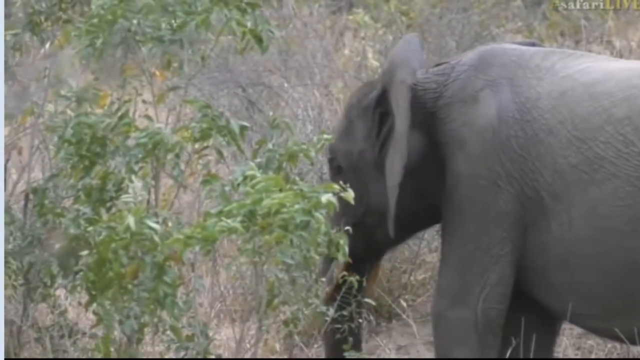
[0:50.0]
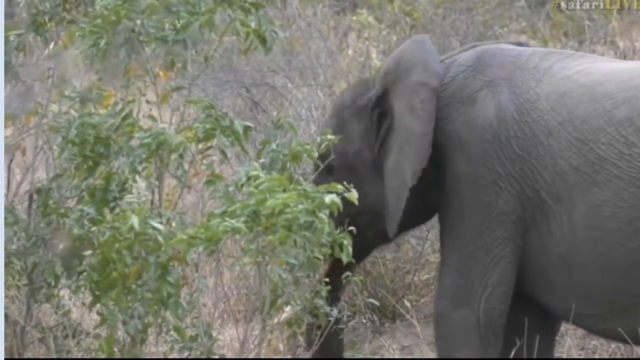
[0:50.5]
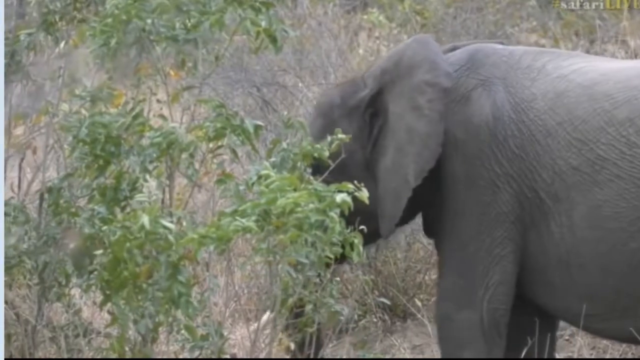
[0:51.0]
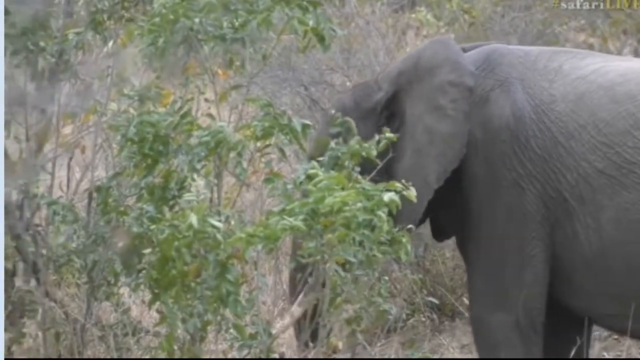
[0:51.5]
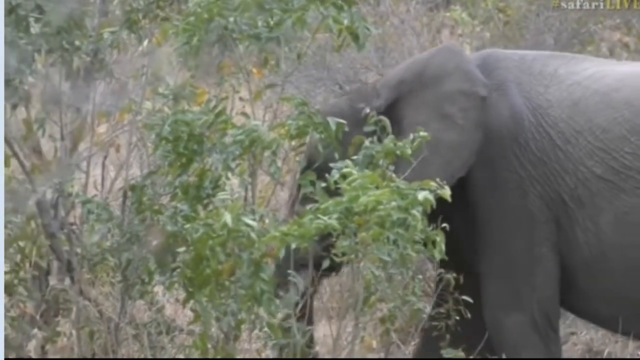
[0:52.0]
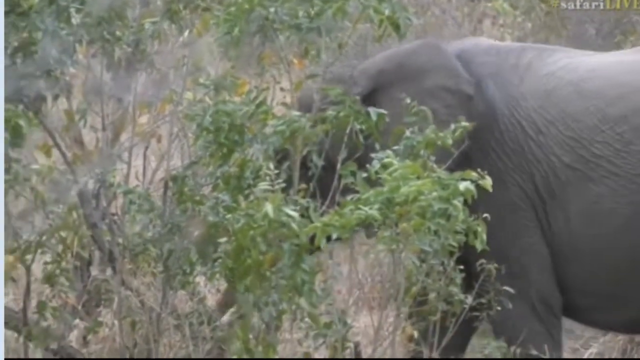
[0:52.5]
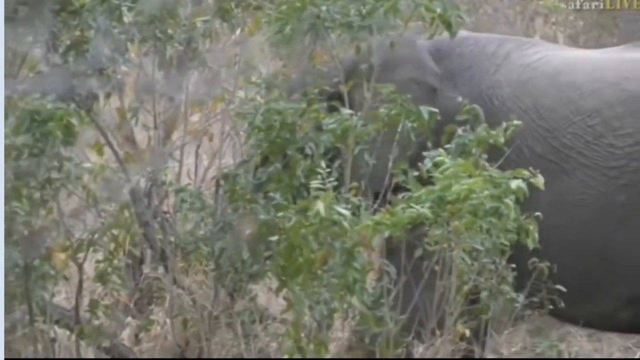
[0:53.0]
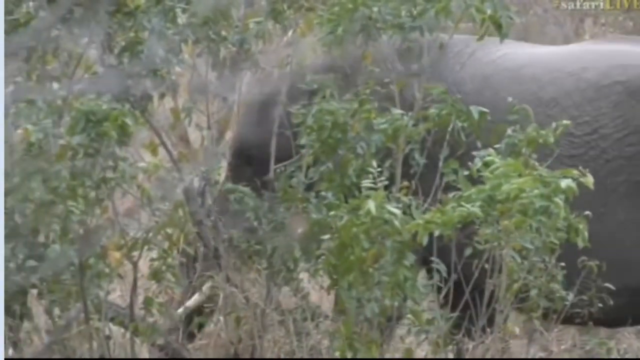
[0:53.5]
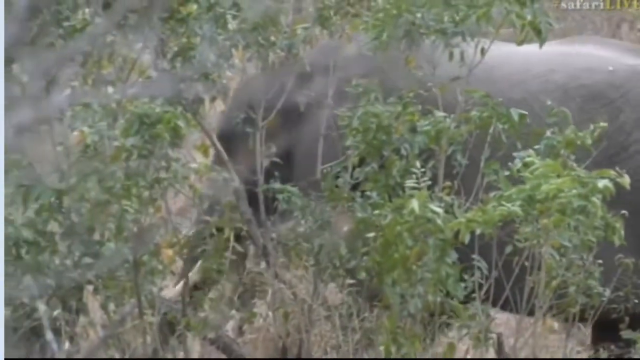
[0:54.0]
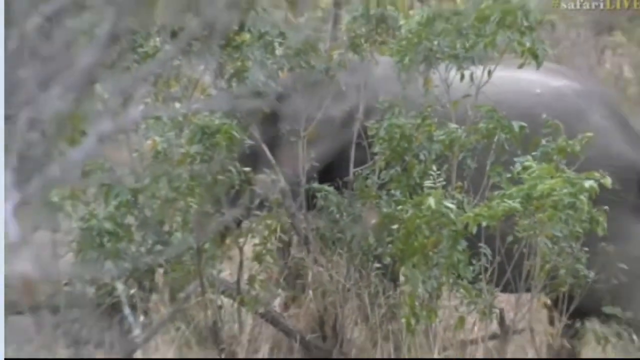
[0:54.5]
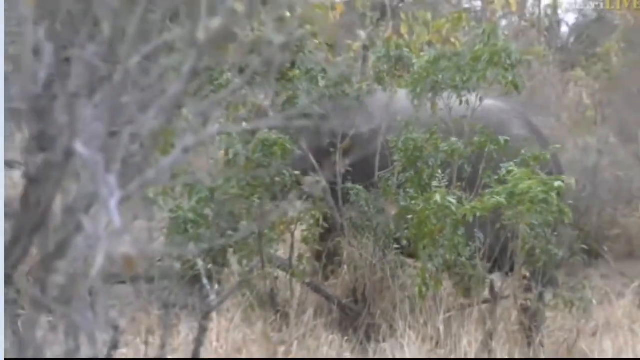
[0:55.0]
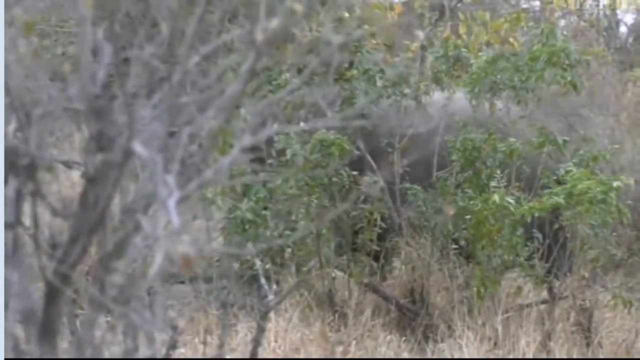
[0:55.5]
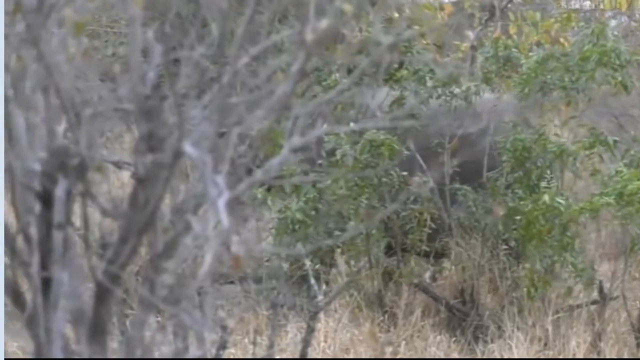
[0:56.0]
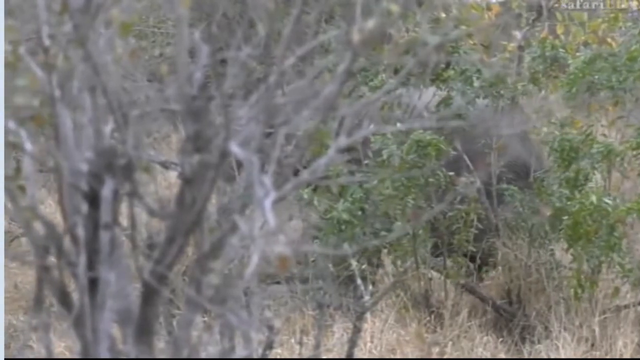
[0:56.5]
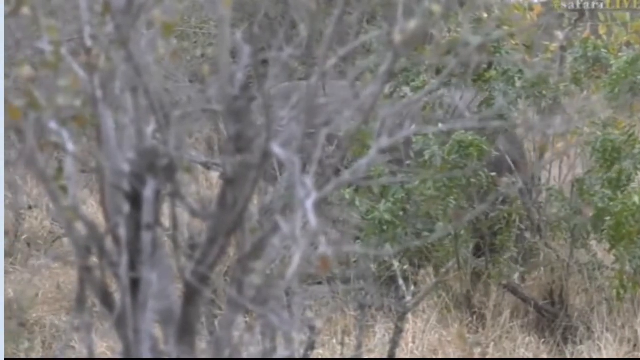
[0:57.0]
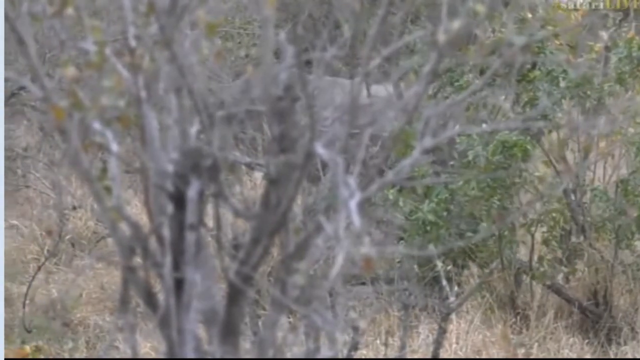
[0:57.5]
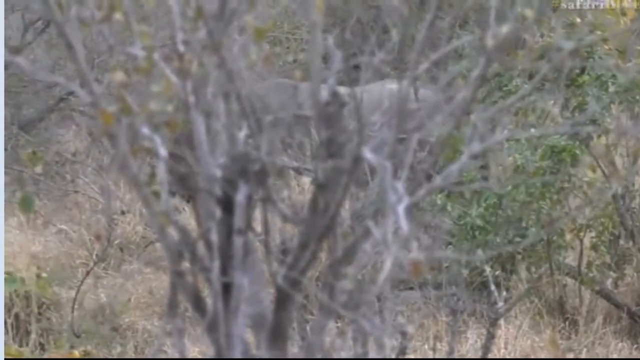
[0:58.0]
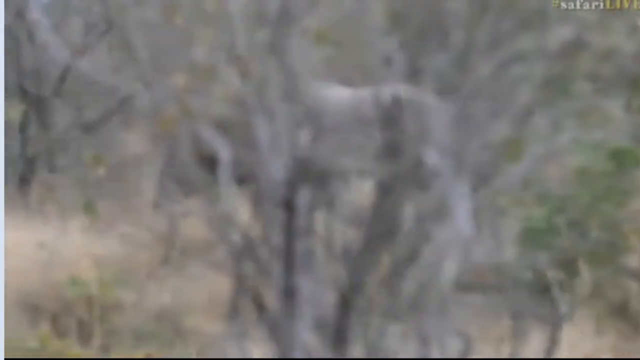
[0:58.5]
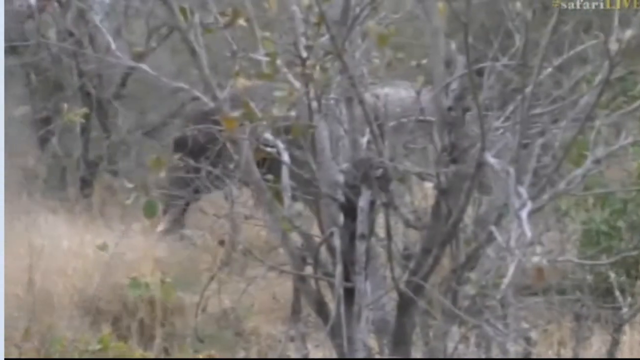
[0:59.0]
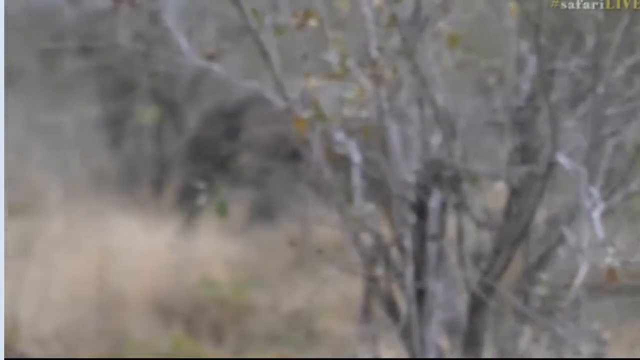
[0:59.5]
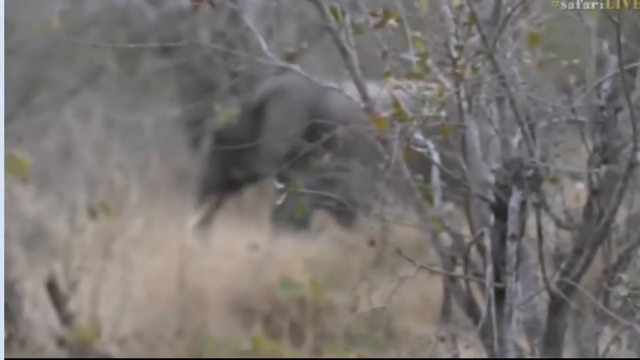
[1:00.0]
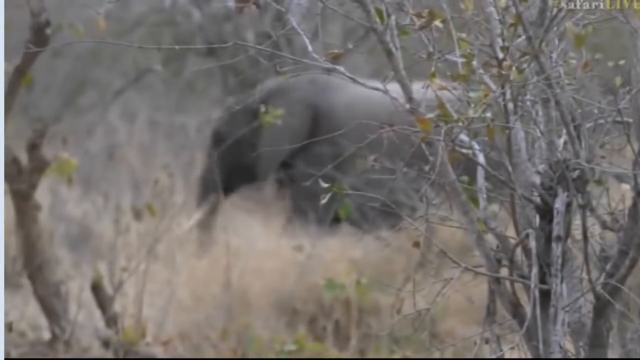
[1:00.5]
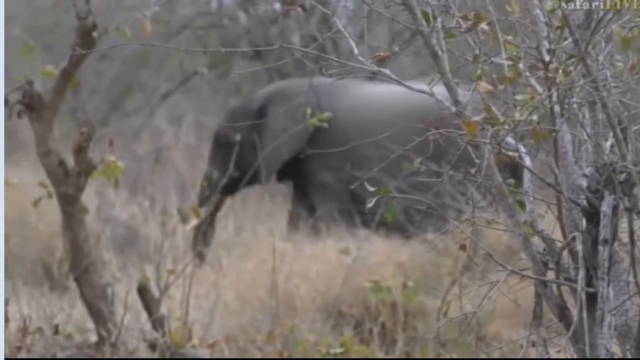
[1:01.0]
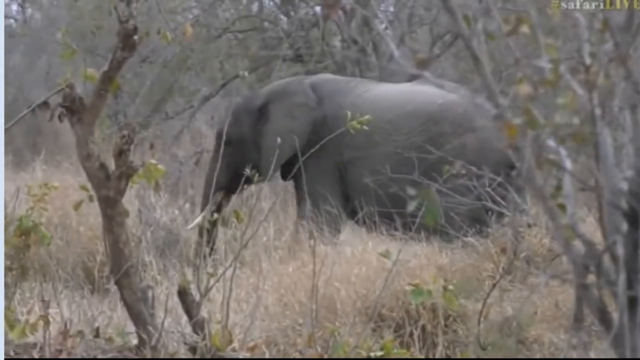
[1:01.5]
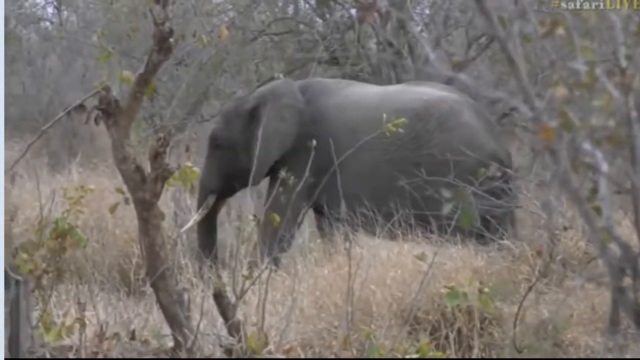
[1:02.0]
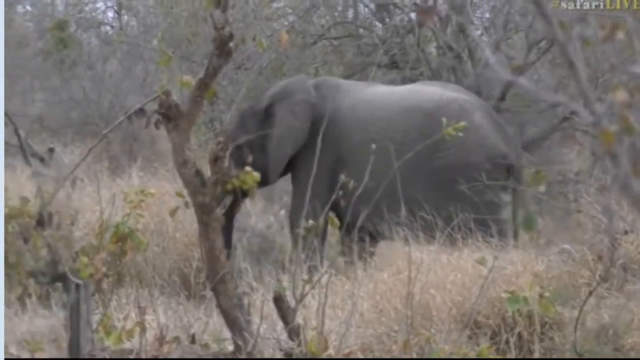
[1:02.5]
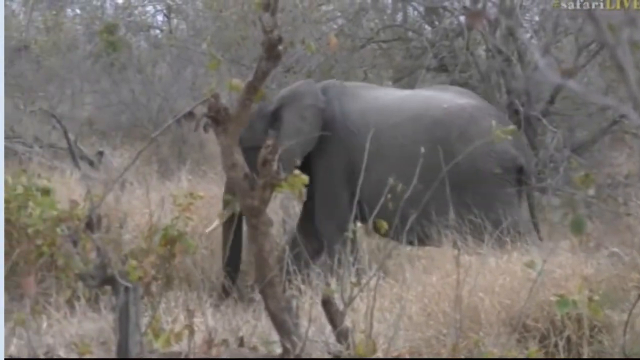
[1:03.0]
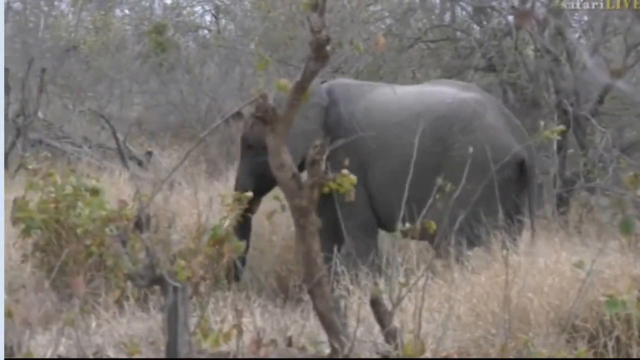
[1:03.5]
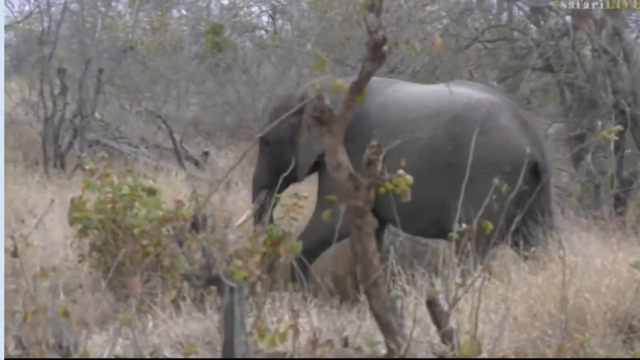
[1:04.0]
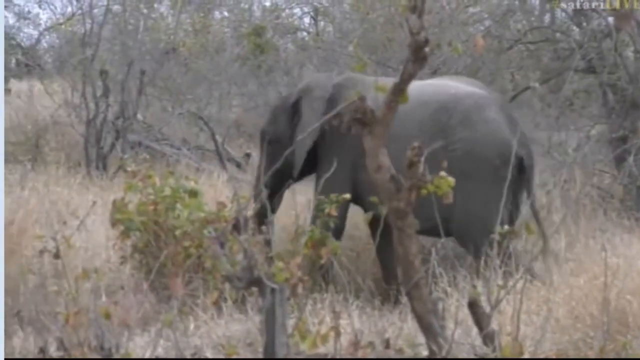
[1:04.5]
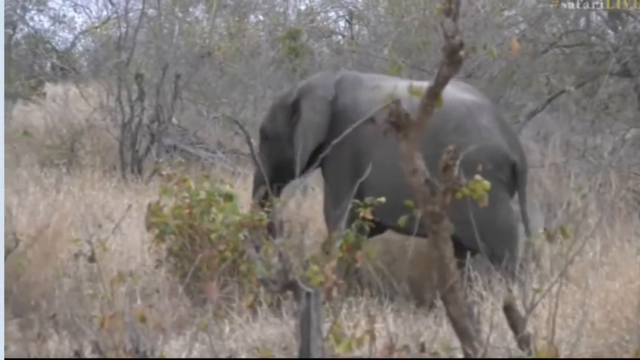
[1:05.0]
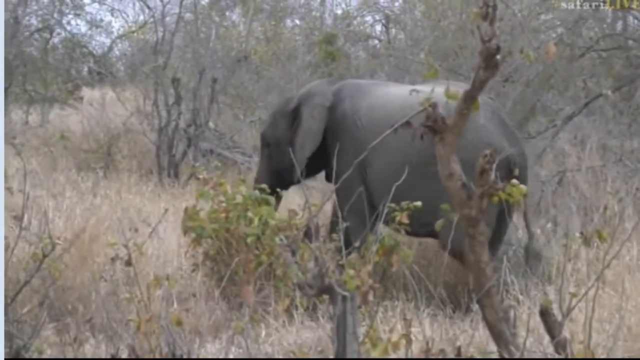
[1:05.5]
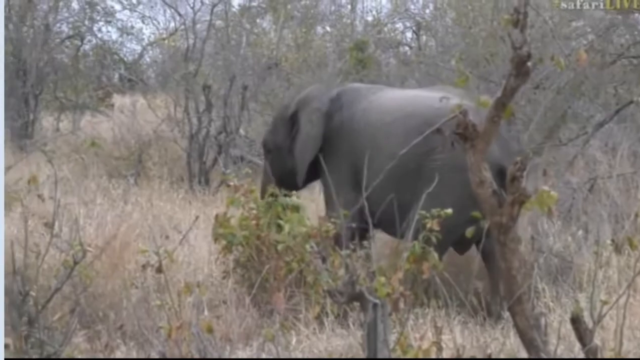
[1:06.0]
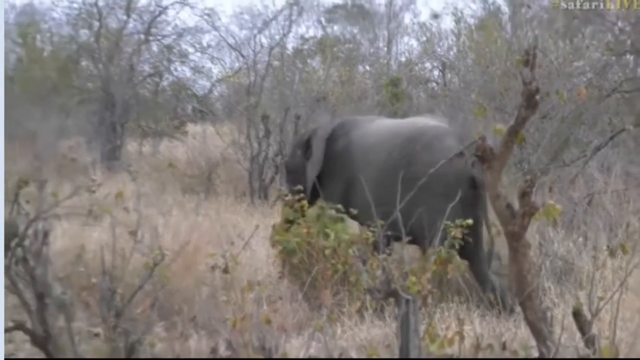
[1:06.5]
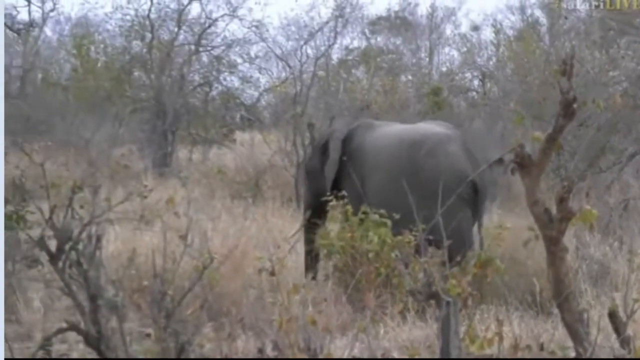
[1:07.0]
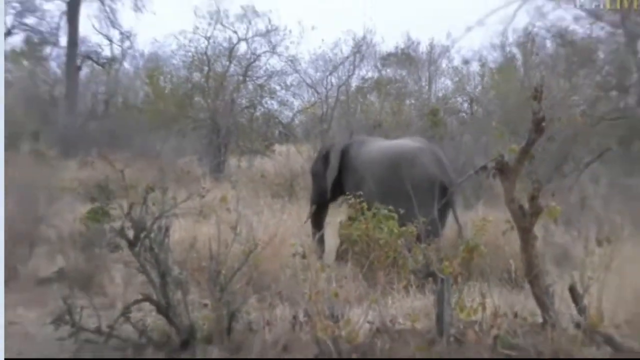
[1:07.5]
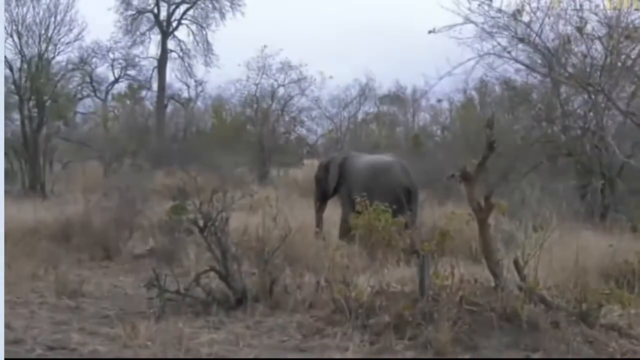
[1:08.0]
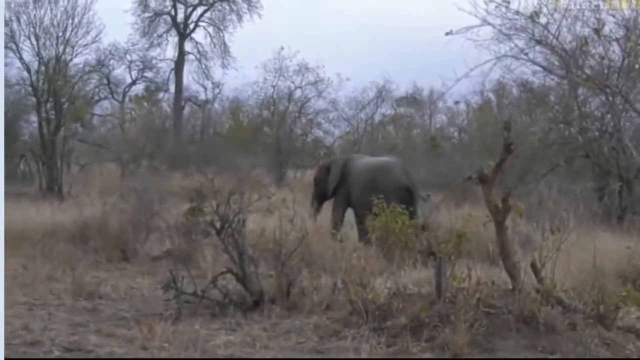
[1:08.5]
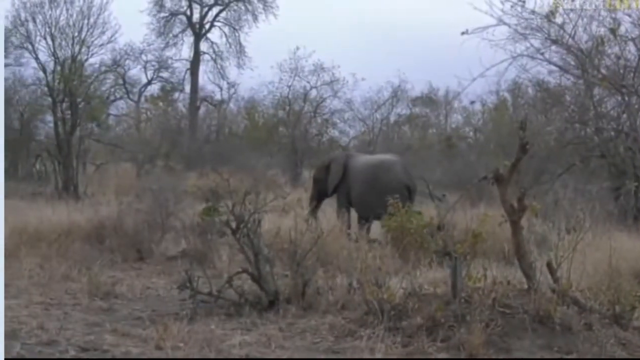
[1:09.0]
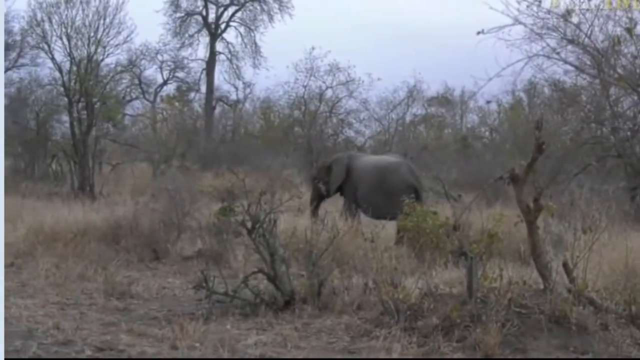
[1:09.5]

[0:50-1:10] The elephant is shown zoomed in, revealing its dry, rough skin. It keeps walking behind the trees, where it becomes blurry, but it continues on, ambling without hurrying, possibly looking for food among the trees. Most of the trees in the bush are dry and only a few still have green leaves. The elephant does not look at the camera.